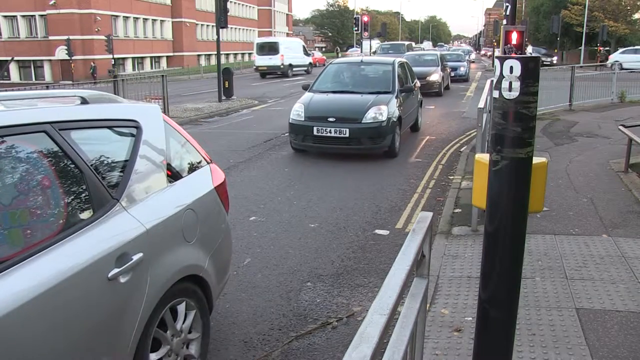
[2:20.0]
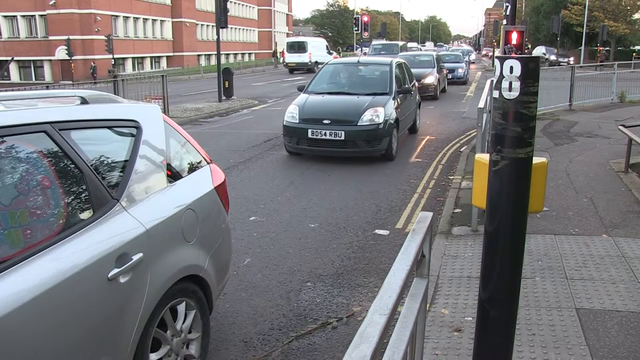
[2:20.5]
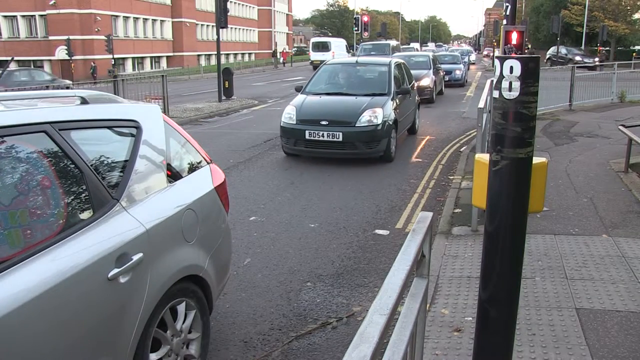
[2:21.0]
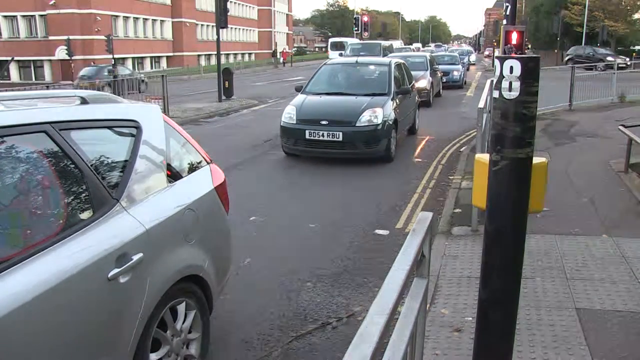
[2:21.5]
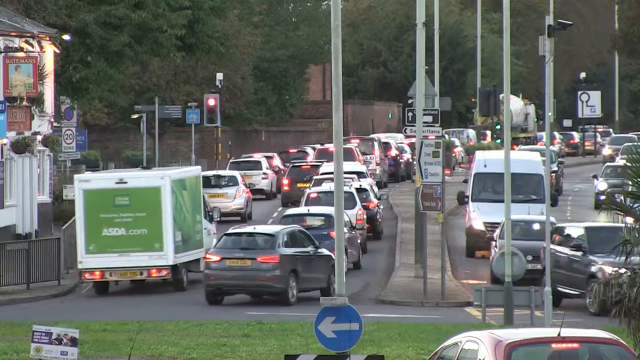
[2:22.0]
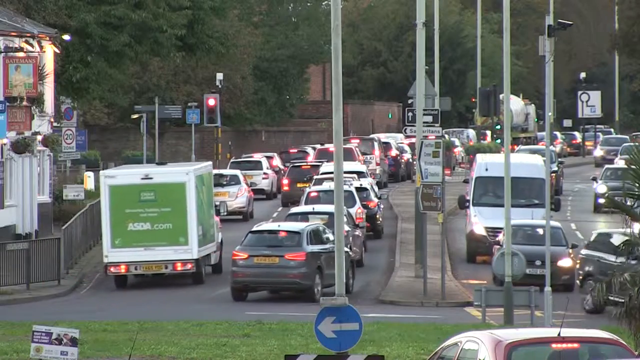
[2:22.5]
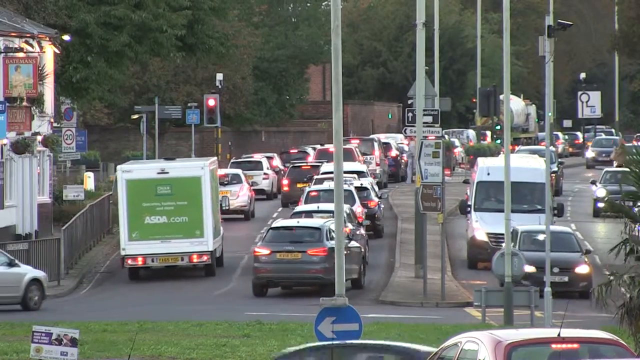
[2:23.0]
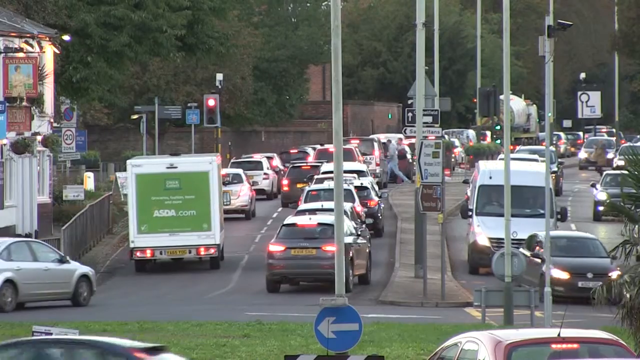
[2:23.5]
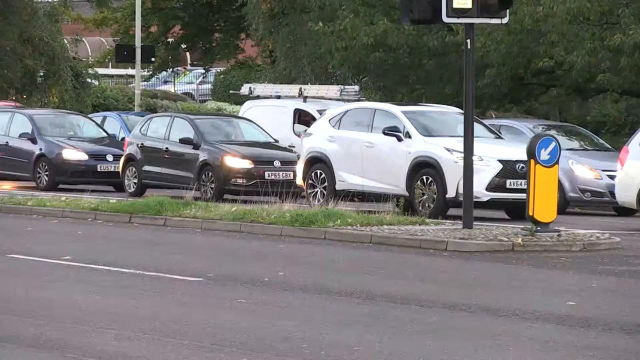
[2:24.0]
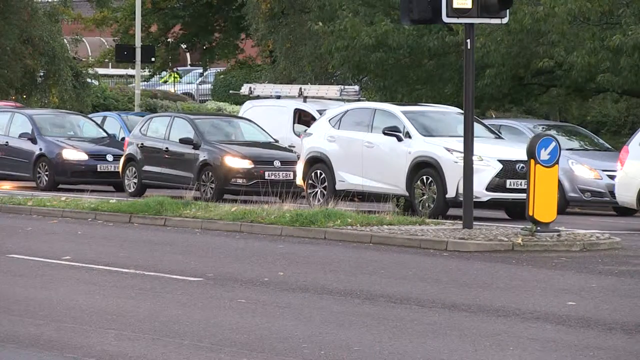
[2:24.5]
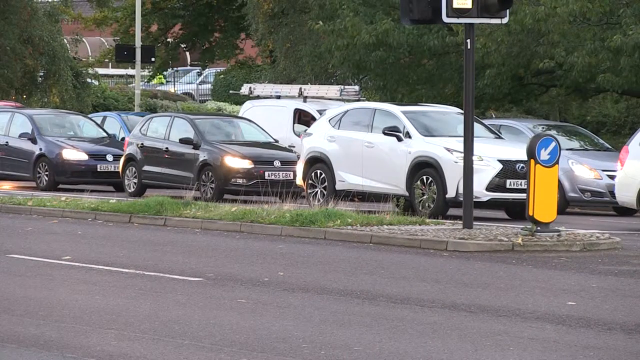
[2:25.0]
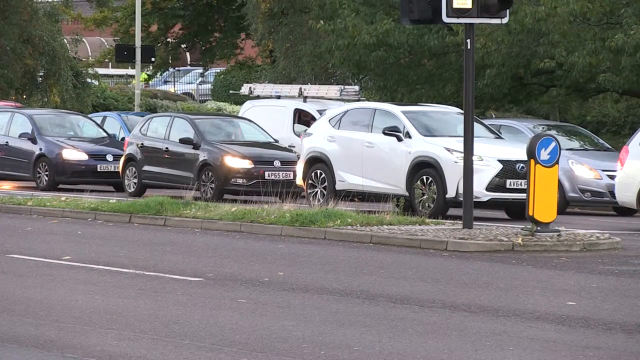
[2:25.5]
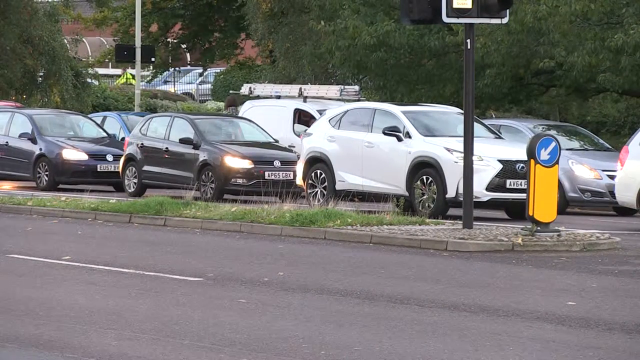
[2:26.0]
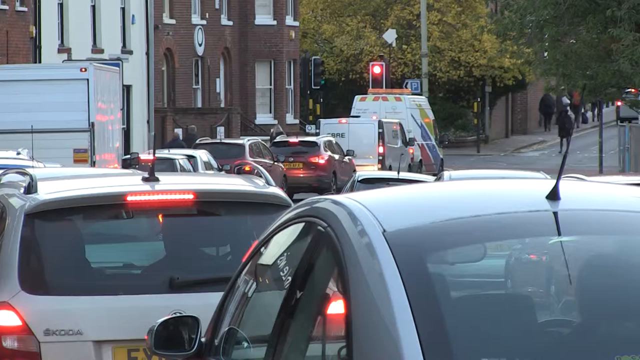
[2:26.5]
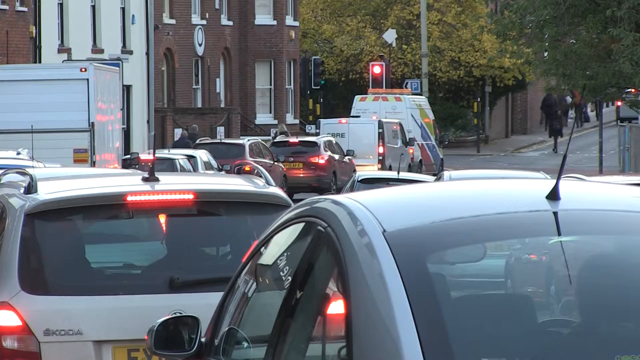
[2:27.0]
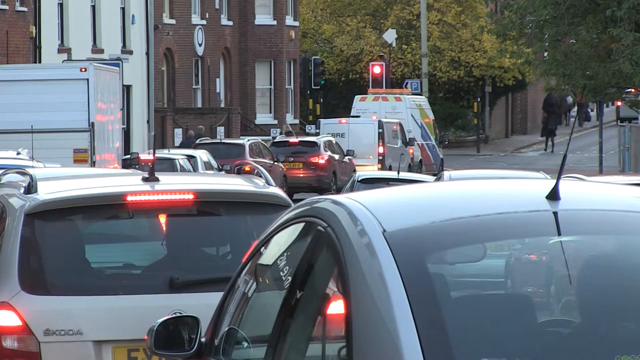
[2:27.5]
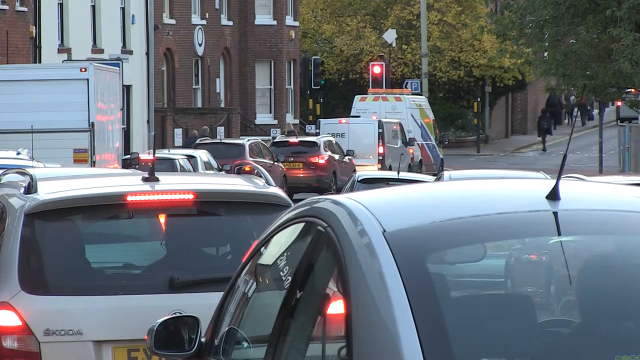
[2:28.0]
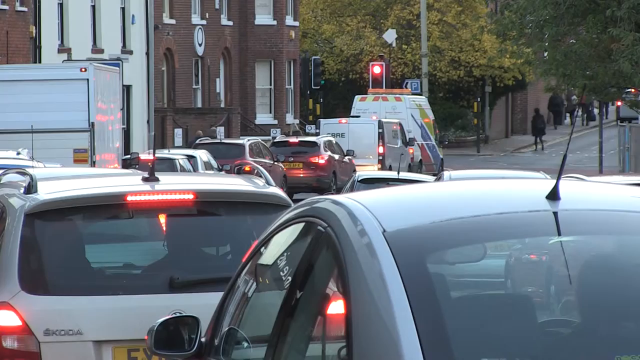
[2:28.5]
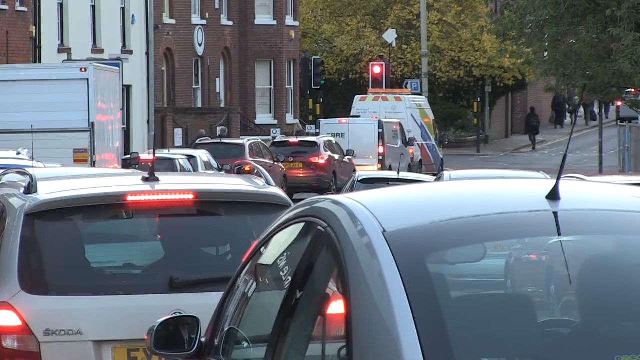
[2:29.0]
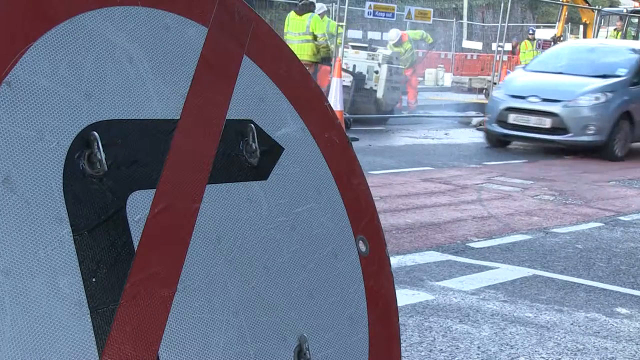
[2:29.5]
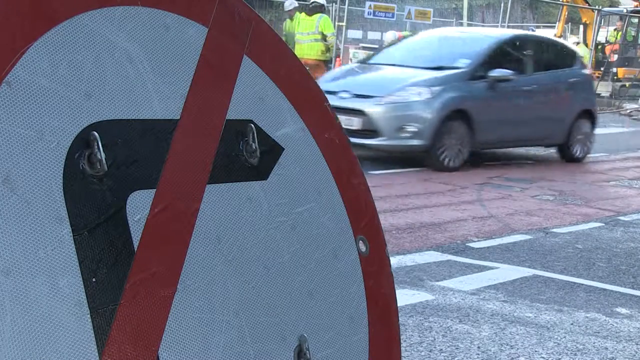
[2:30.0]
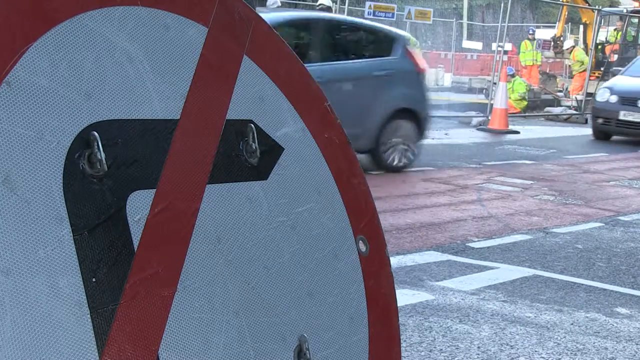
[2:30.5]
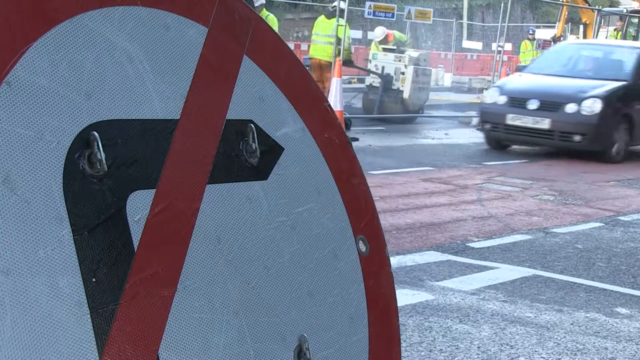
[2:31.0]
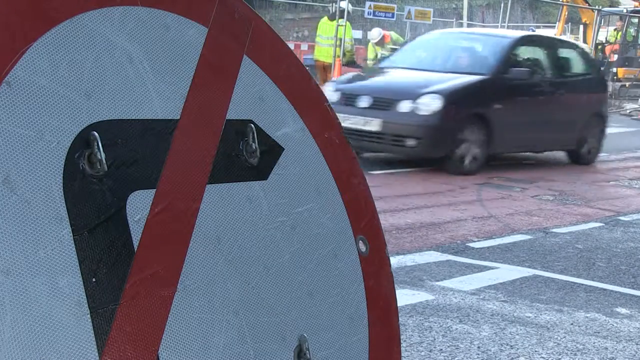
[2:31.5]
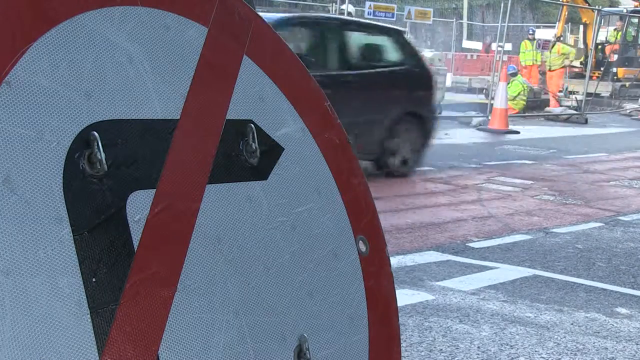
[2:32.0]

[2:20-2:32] Slow traffic and convoys continue along the road, with cars moving slowly. The road repairs continue with visible demarcations, pedestrians walk around the route, and workmen on site work on fixing the road.